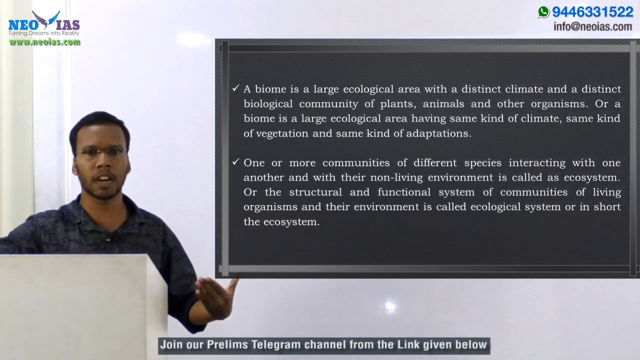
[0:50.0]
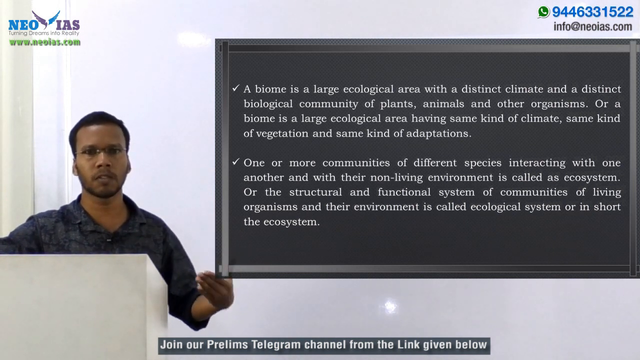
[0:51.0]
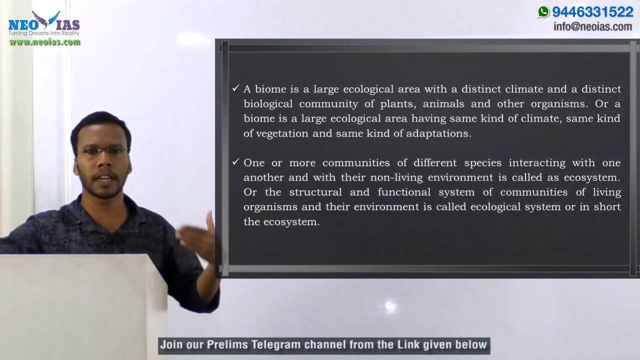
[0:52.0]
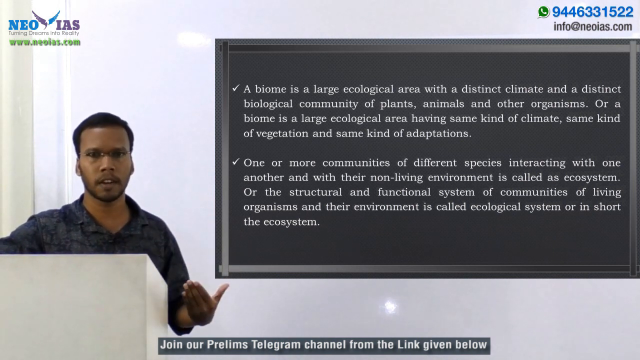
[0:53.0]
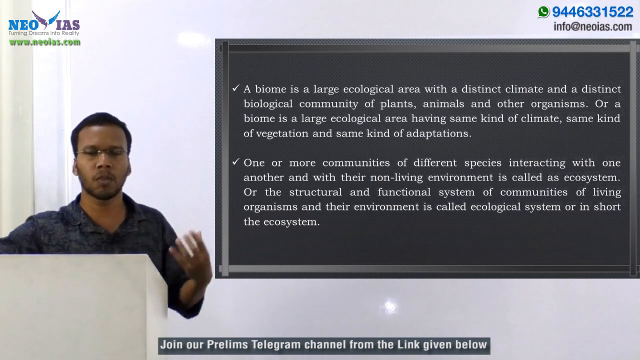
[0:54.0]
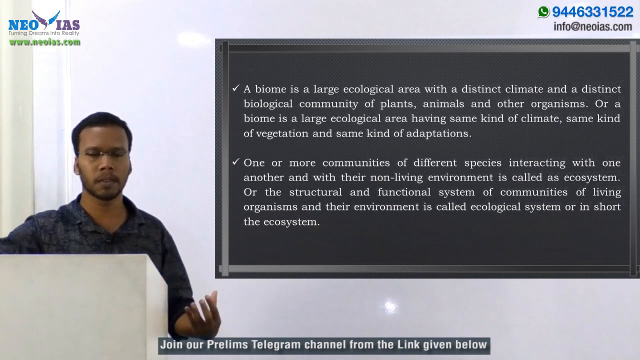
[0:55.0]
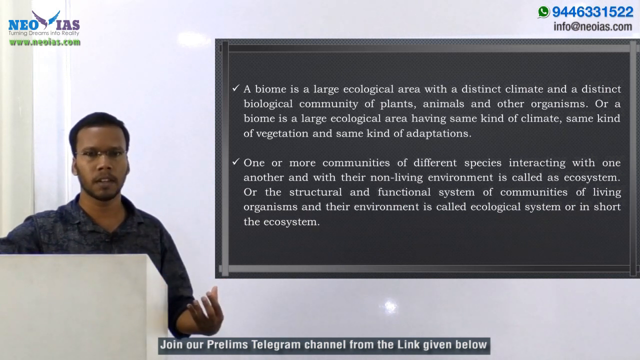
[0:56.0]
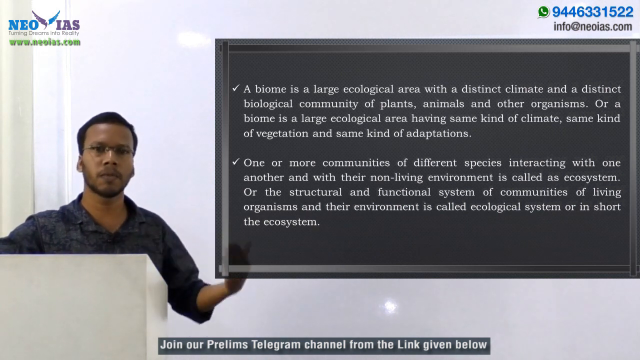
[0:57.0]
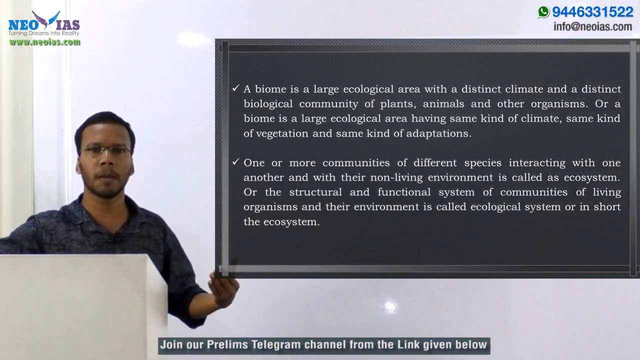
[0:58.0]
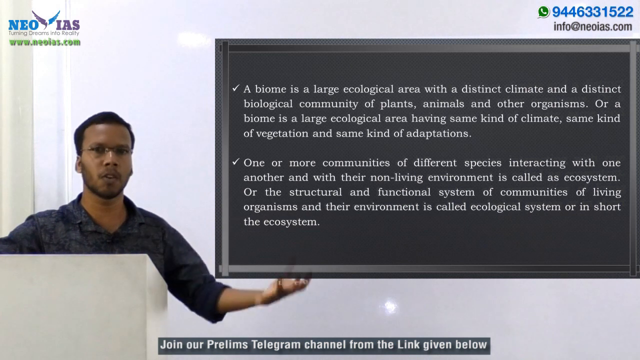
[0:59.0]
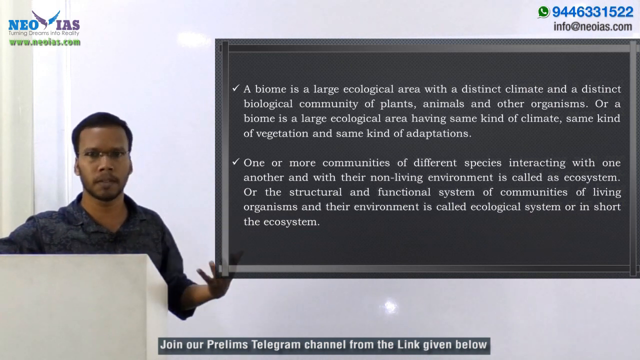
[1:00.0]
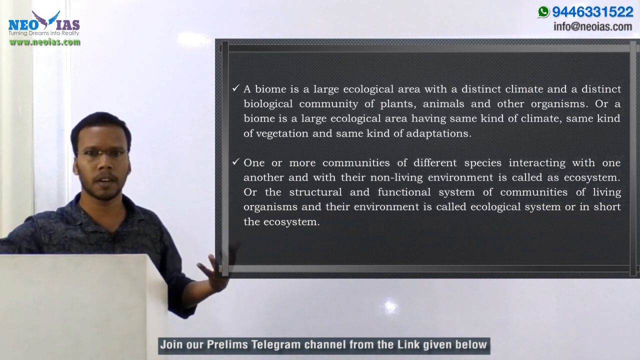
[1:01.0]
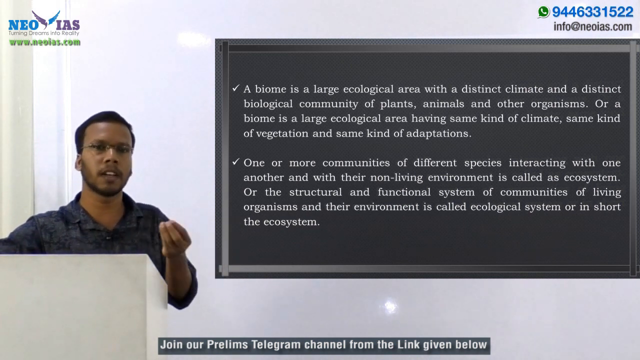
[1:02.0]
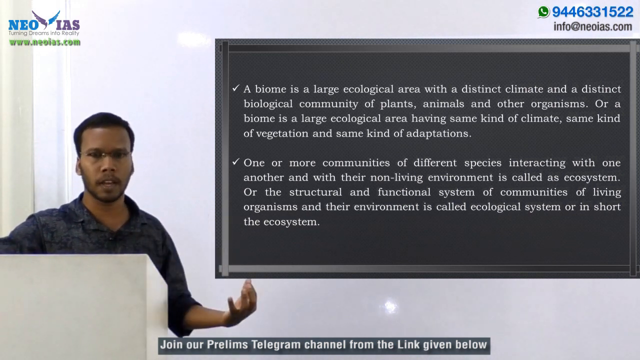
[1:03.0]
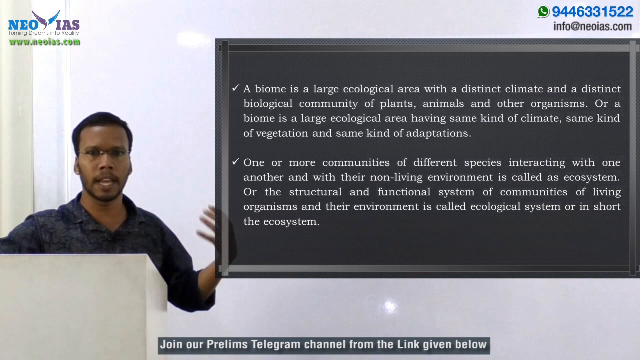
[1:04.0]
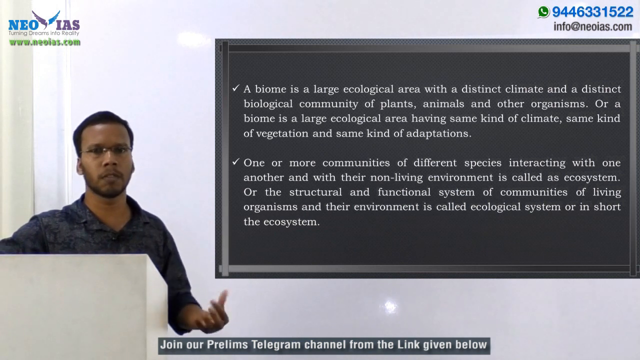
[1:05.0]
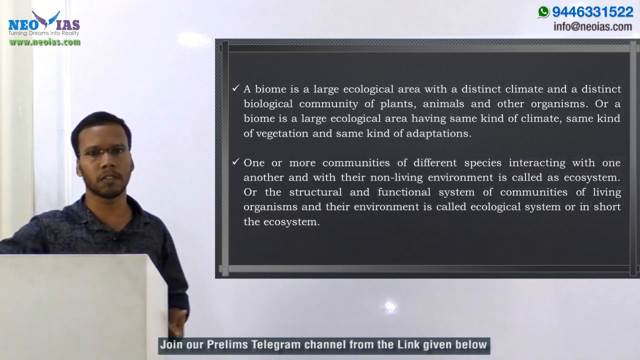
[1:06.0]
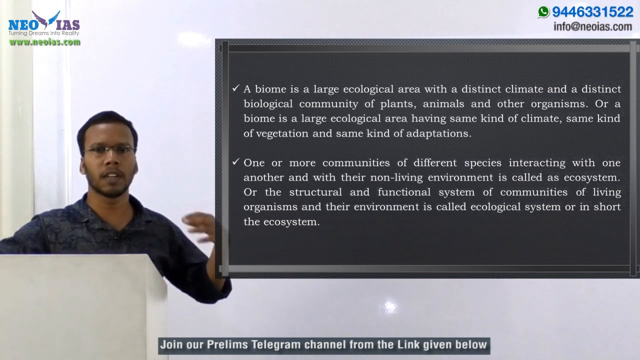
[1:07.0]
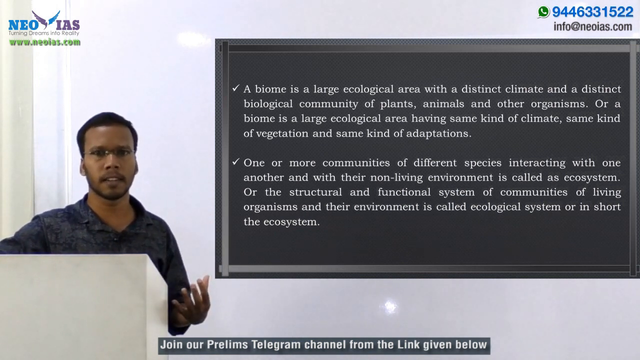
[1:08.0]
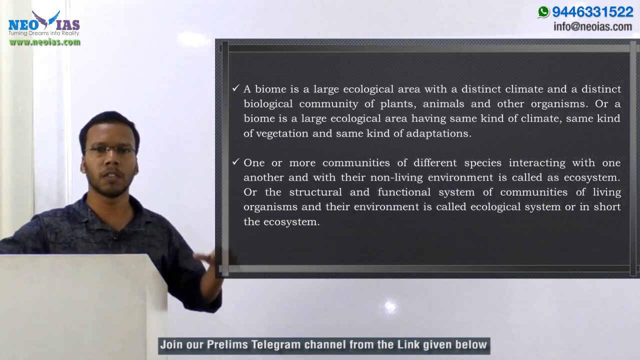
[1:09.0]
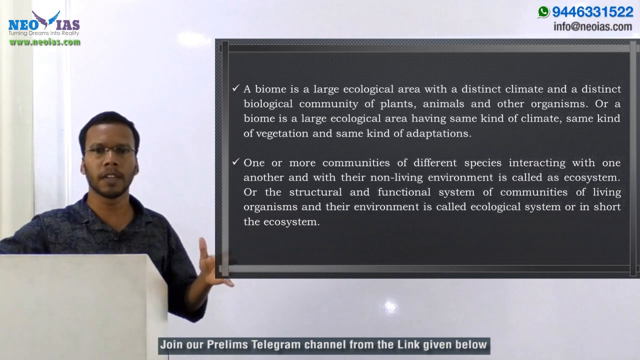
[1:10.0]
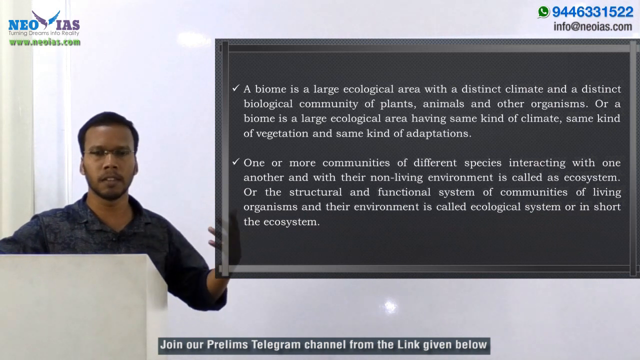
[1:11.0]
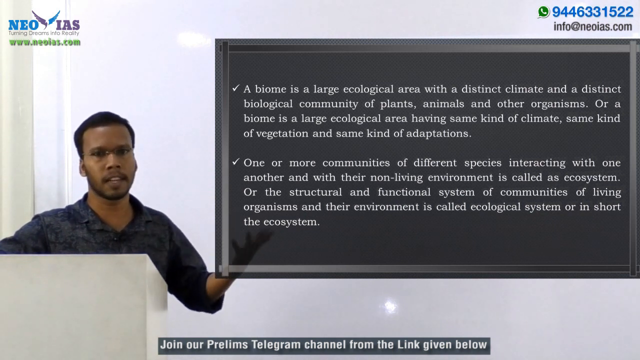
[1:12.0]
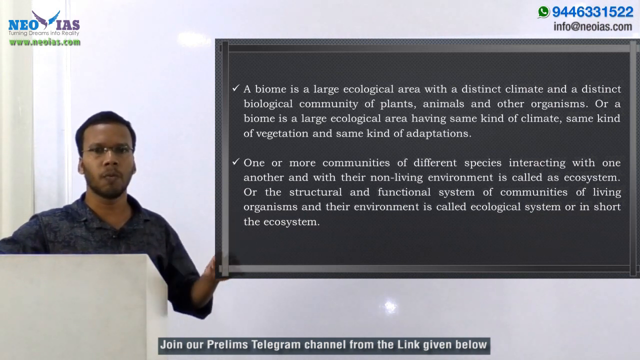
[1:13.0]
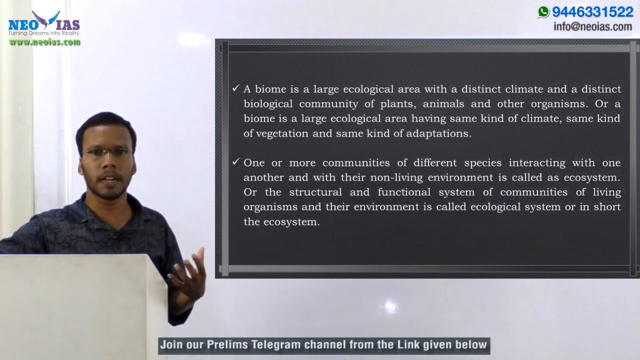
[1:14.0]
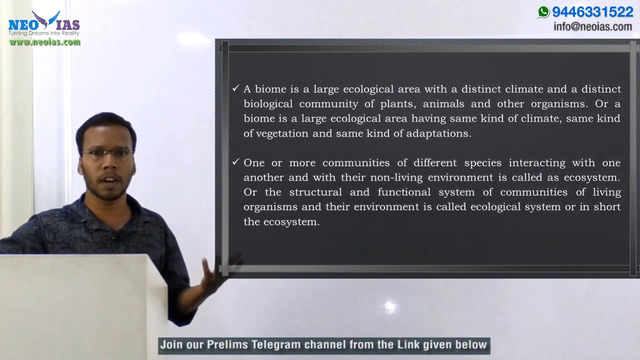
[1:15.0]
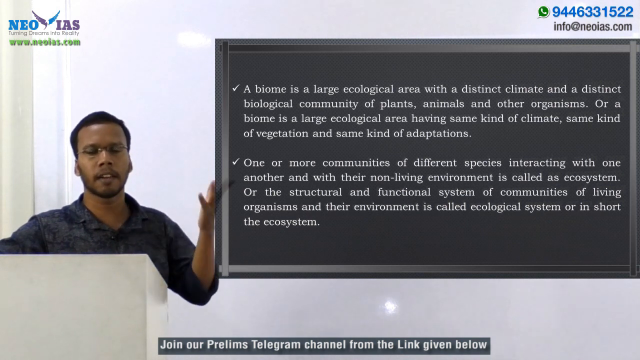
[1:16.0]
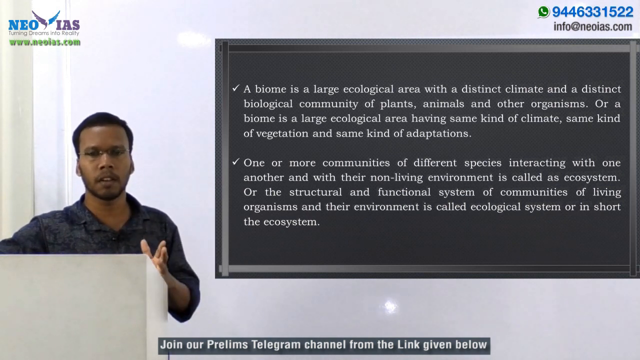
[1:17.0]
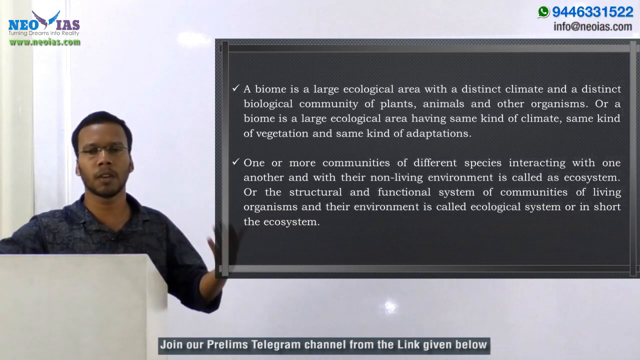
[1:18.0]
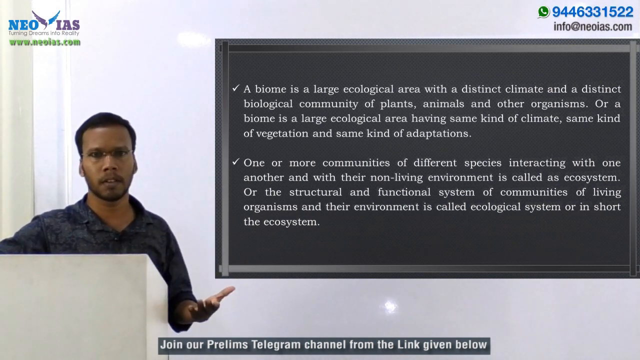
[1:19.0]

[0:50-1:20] While the man speaks, his right arm is not visible; only his short collar and, most of the time, his left arm can be seen. He twirls his left arm around and pulls it in toward himself as he talks through different parts of the material. When he puts his arm out, it becomes clear the blackboard is not real but an overlay on the video: his hand goes behind it and looks like a silhouette. Behind him there is also some kind of white board, which appears to shimmer, with light spots reflecting in different places. A black banner centered along the very bottom edge, hard to see, reads "join our pre-time telegram channel from the link given."